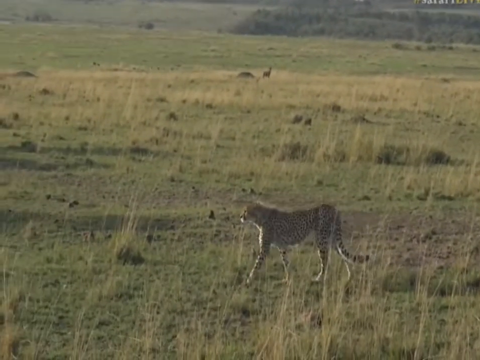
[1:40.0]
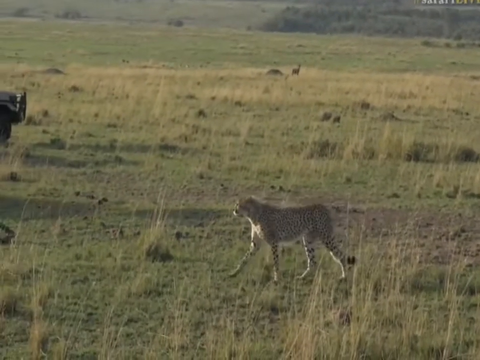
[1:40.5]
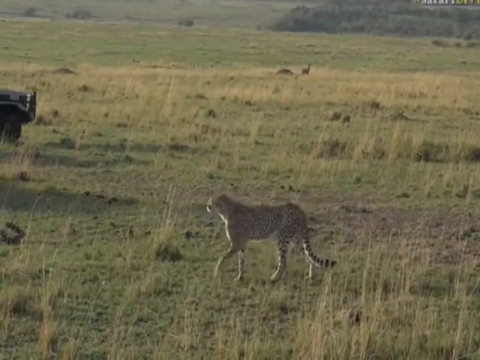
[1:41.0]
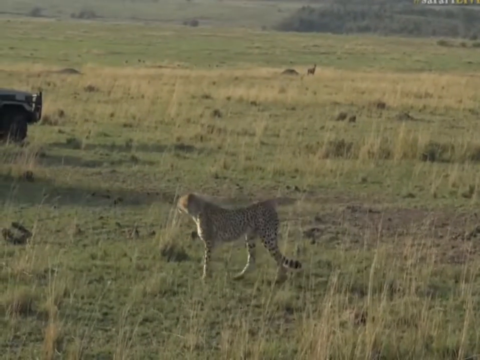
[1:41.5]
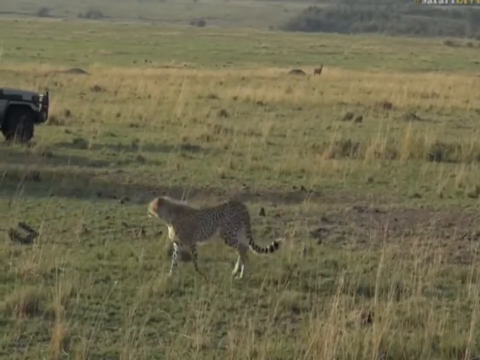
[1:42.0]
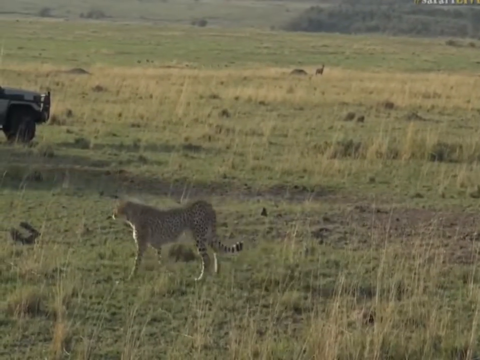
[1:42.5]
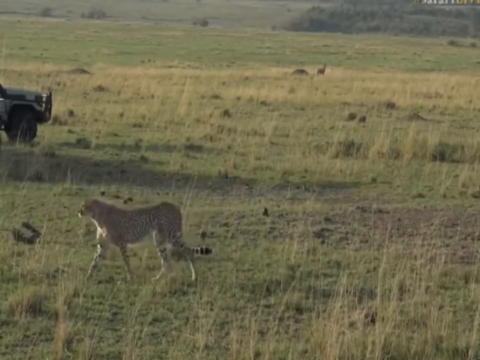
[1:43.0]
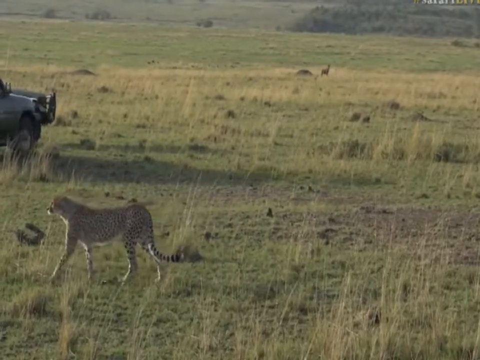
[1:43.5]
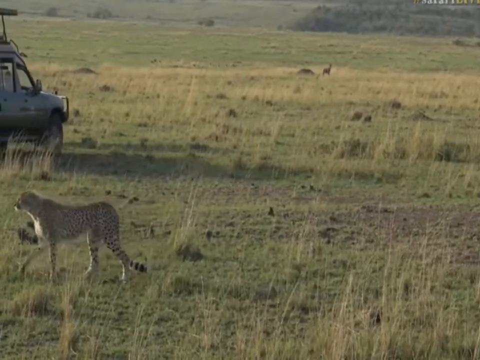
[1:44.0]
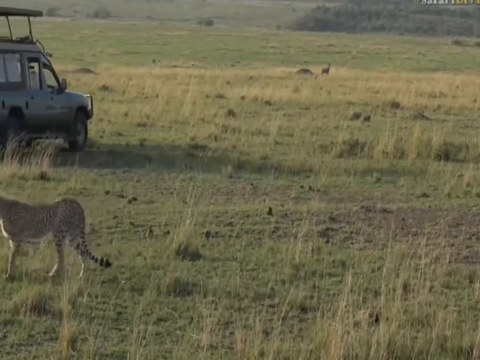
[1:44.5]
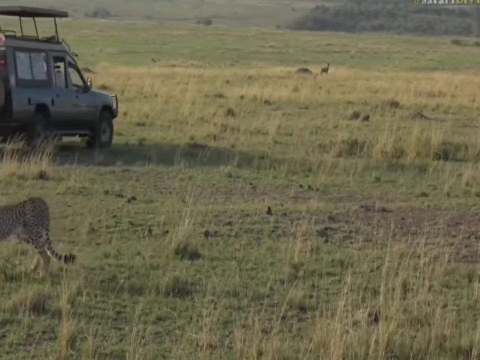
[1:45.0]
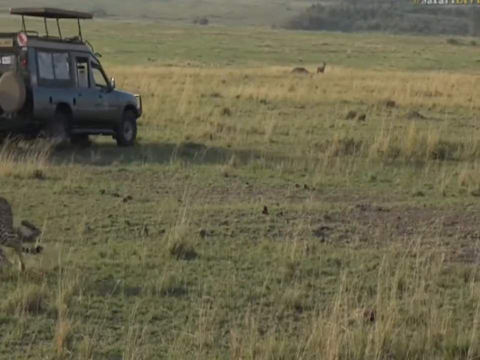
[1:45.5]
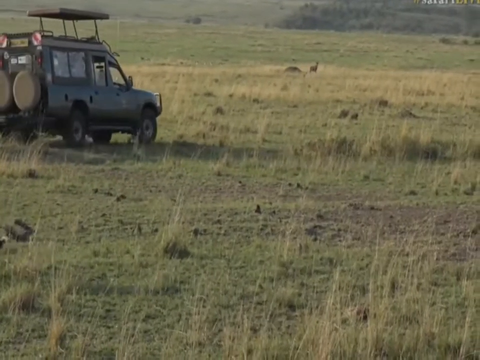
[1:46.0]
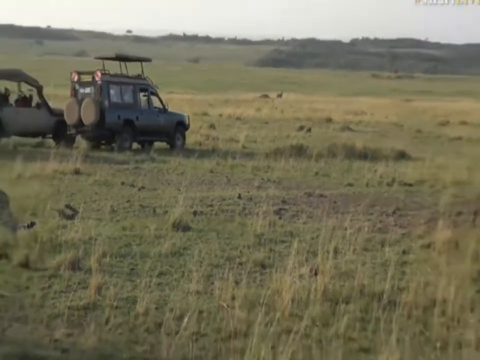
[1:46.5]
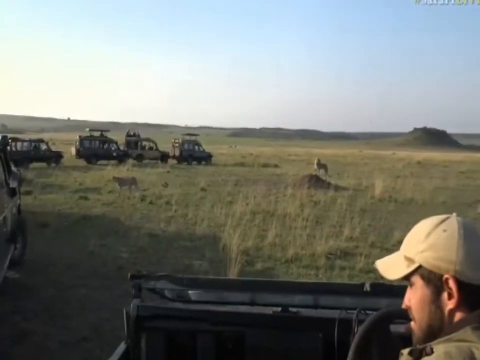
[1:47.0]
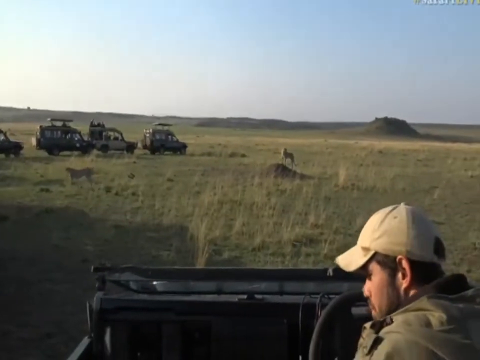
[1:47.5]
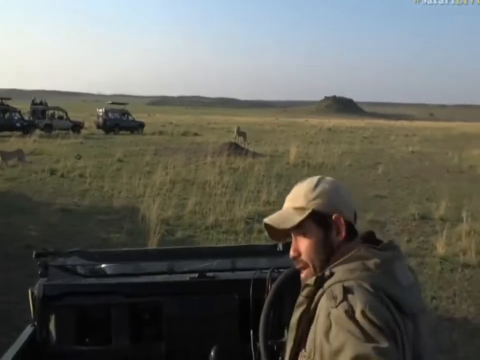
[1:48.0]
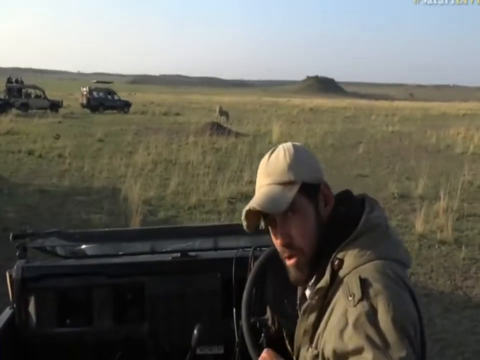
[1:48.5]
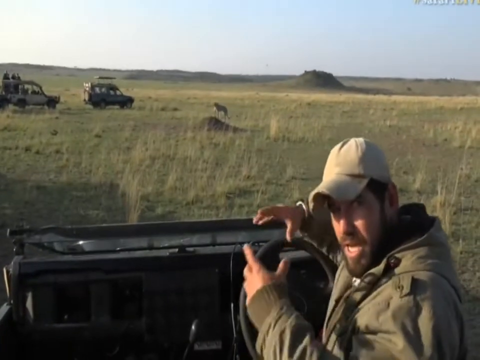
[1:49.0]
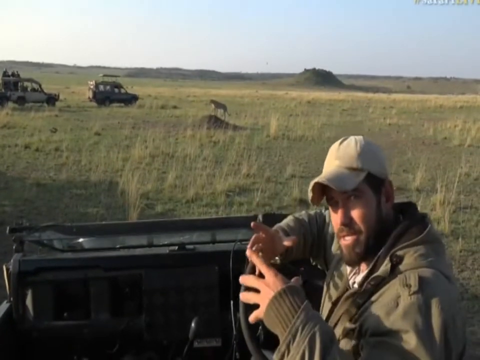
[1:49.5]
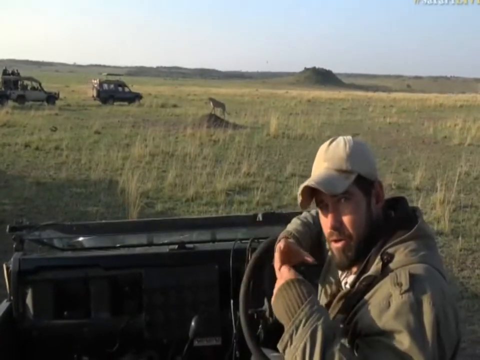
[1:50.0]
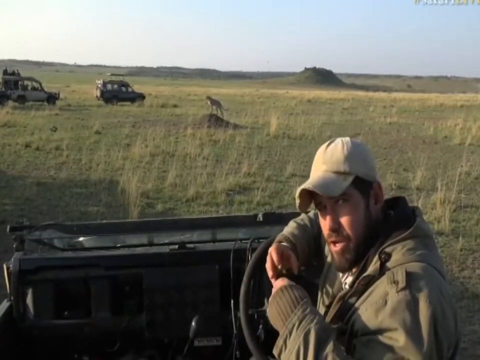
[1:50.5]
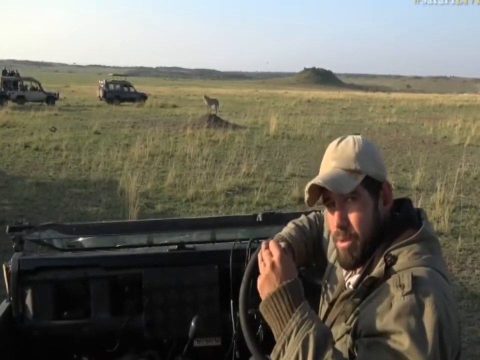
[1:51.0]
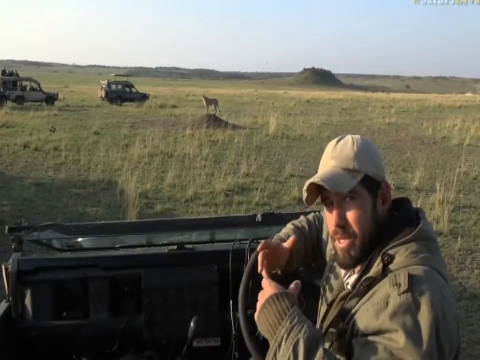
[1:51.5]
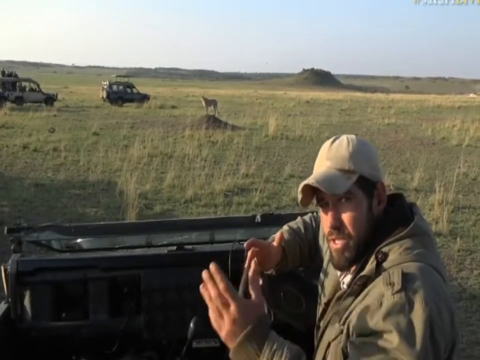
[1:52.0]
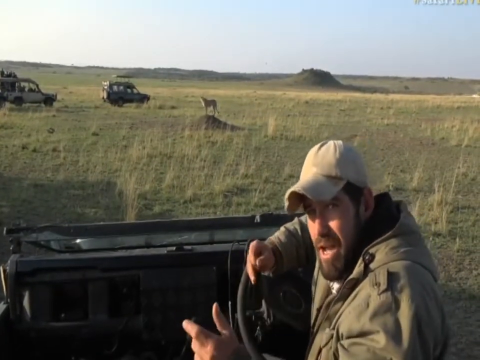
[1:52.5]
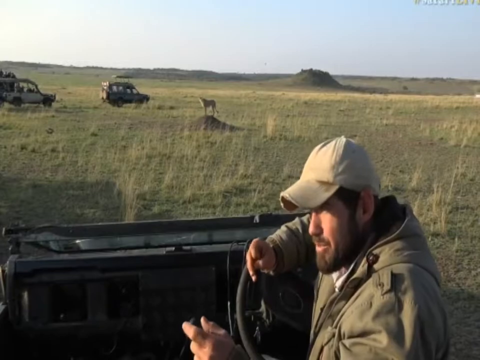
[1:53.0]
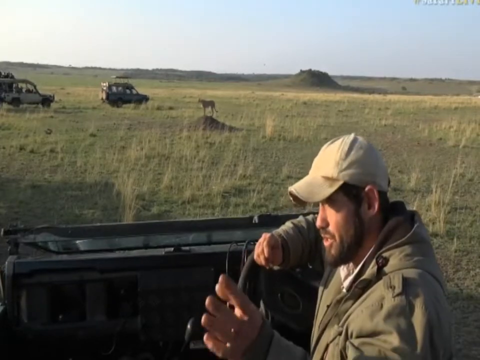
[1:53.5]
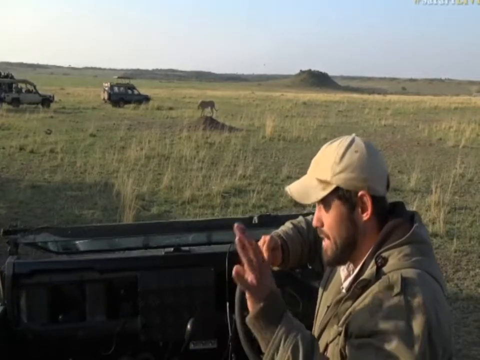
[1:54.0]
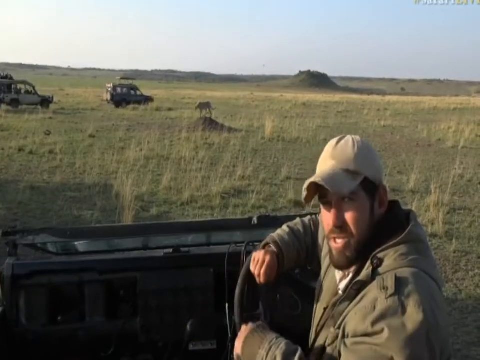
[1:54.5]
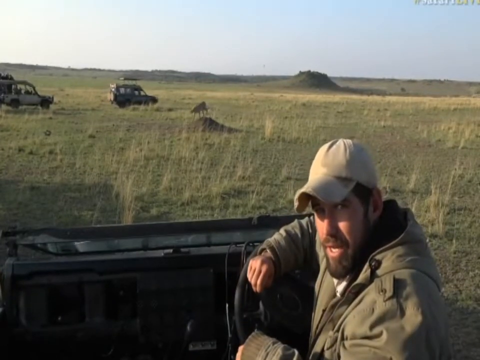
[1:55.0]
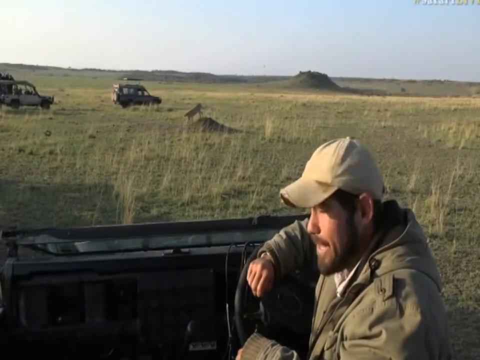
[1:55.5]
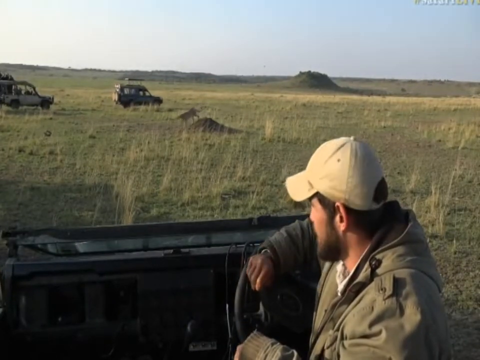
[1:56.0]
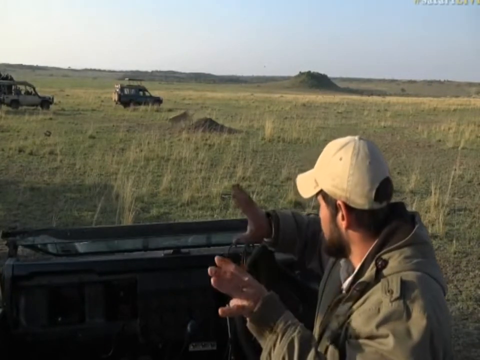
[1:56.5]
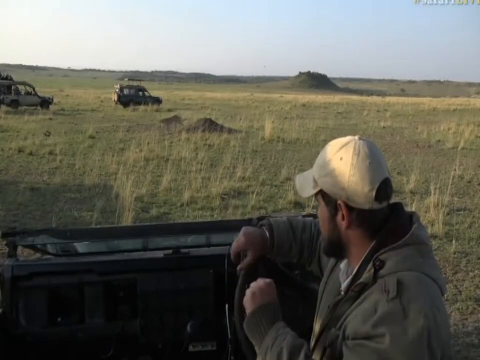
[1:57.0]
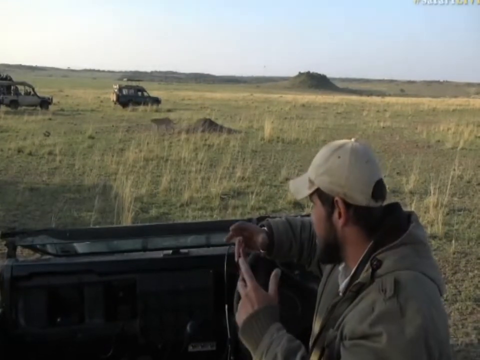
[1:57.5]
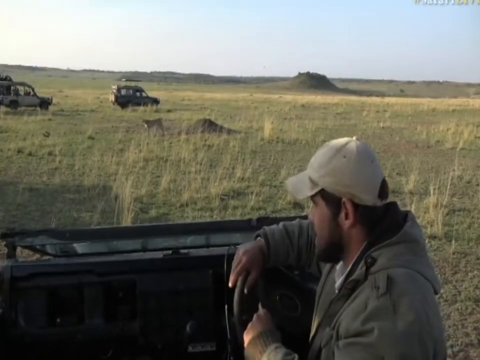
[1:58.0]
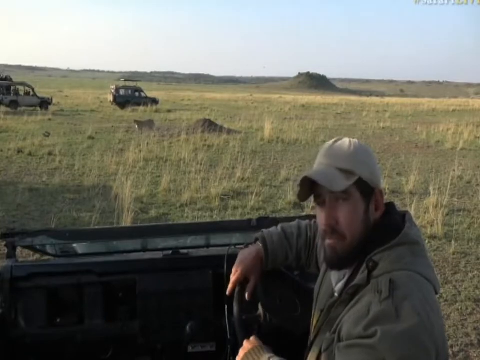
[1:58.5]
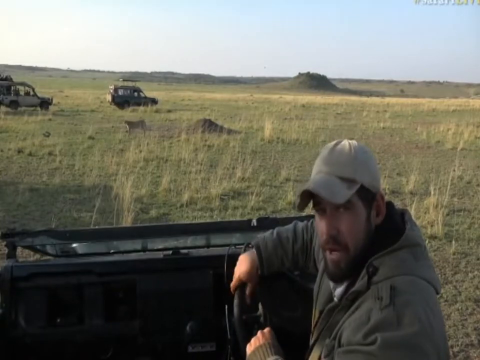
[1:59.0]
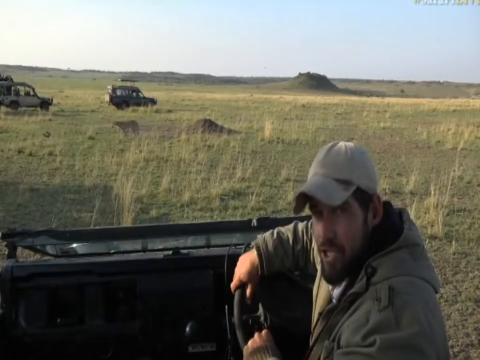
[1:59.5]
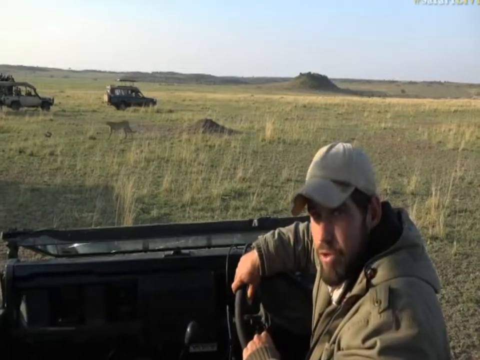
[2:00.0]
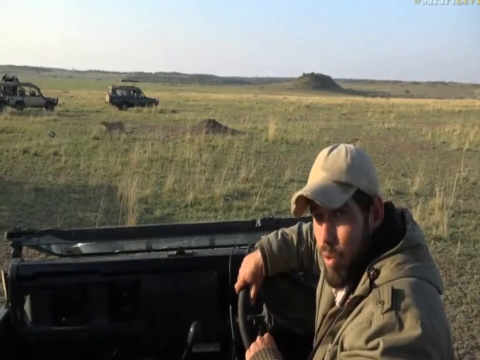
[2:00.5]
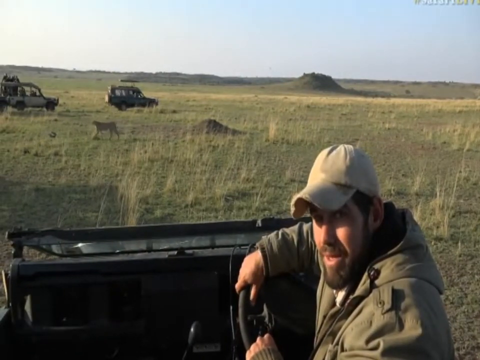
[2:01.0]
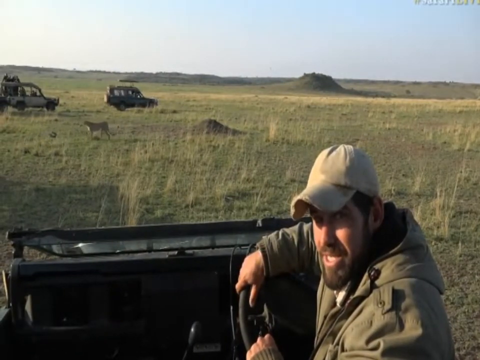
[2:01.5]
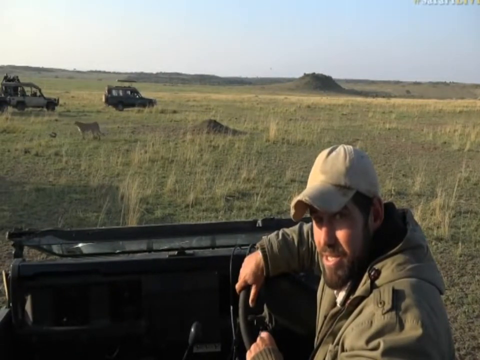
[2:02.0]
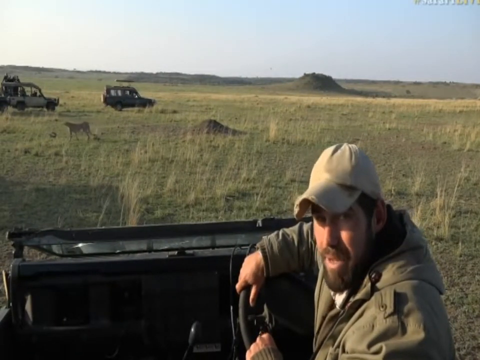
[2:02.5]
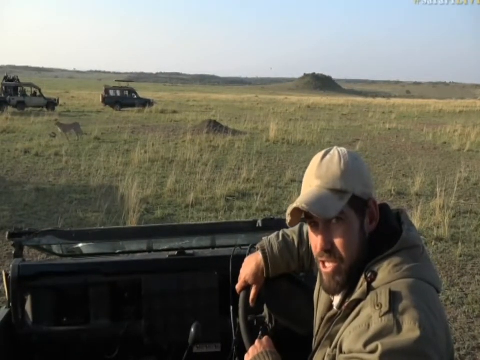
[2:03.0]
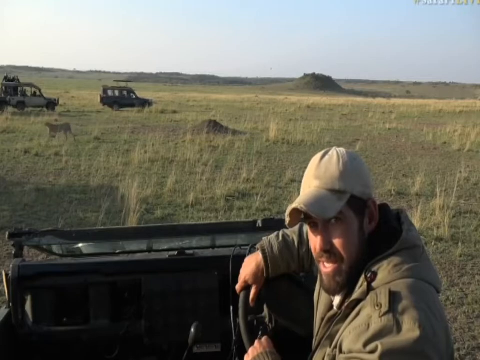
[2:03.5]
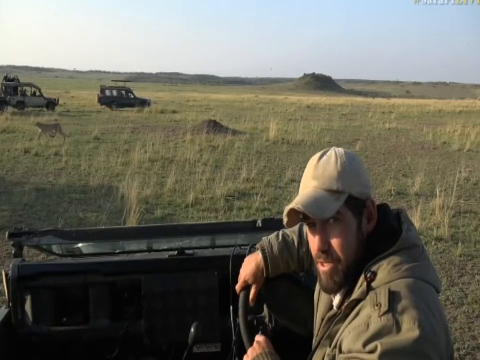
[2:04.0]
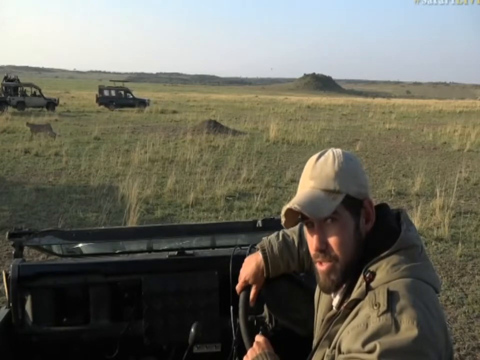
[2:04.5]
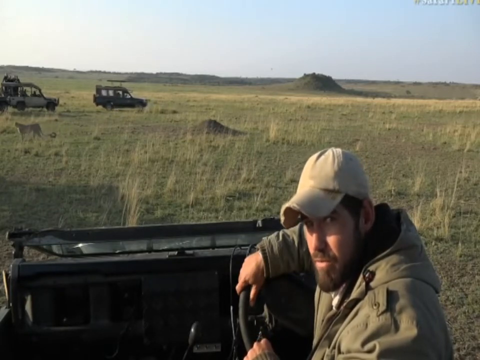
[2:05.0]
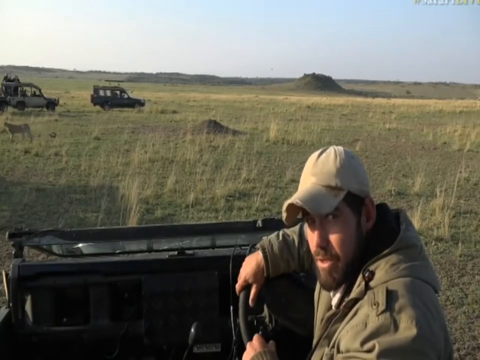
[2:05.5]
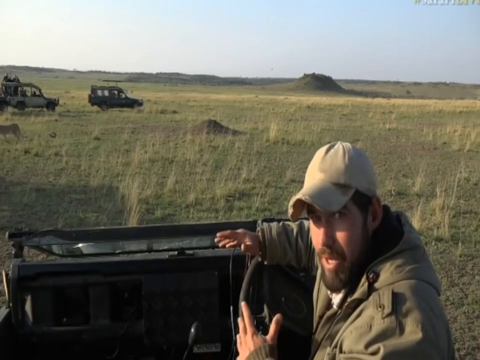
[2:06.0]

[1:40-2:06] The leopard that walked away is still walking toward the left side, possibly to see where the other leopard went. At the far left, what looks like a Jeep begins to drive into frame; it looks like a double-deck Jeep with seats on top and an overhang on top. The camera zooms out, revealing a couple more Jeeps back there. The camera then pulls back to show a man in a Jeep that has had its top cut off, with no top or windshield. He wears a hat and a green jacket, turns toward the camera, and motions with his hands toward himself, seemingly talking about the leopards. His right hand hovers over or leans on the steering wheel. In the background, the leopard that was sniffing the hill begins to walk down toward the right side of the hill and then saunters toward the left side of the screen, while the man continues to speak to the camera in the foreground.